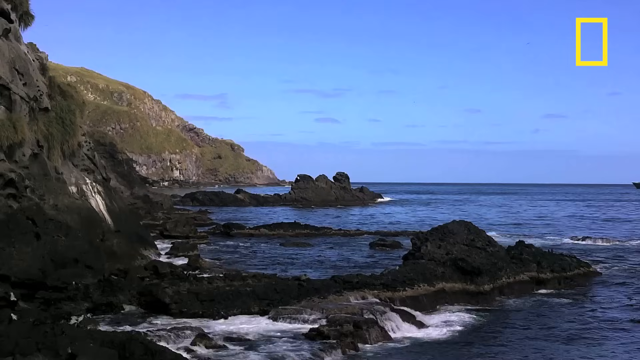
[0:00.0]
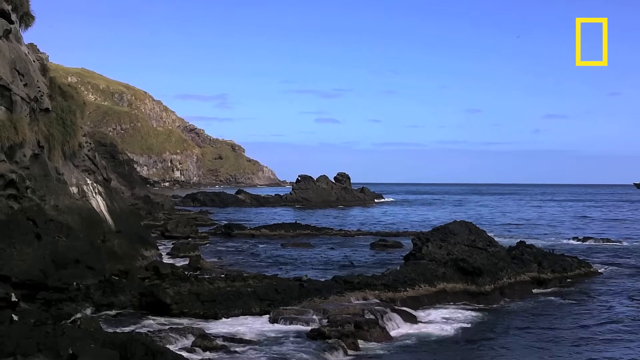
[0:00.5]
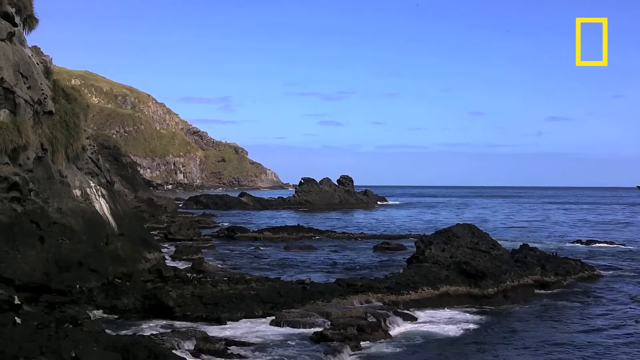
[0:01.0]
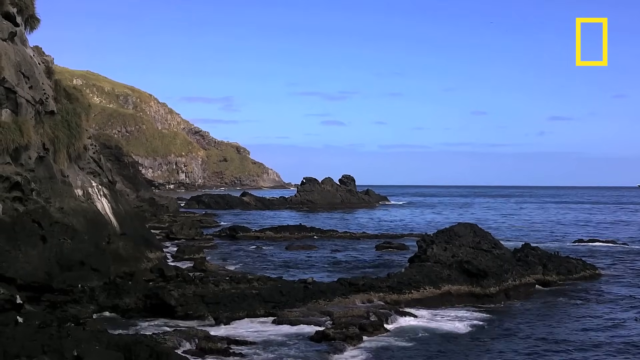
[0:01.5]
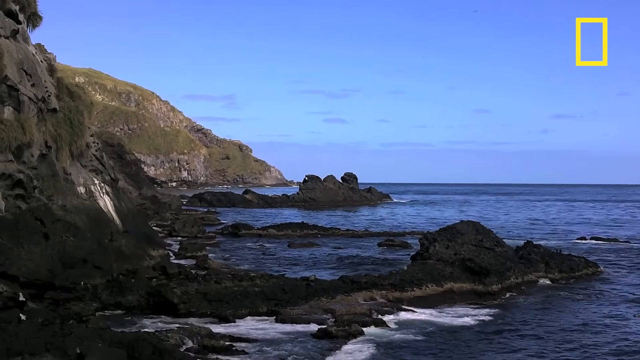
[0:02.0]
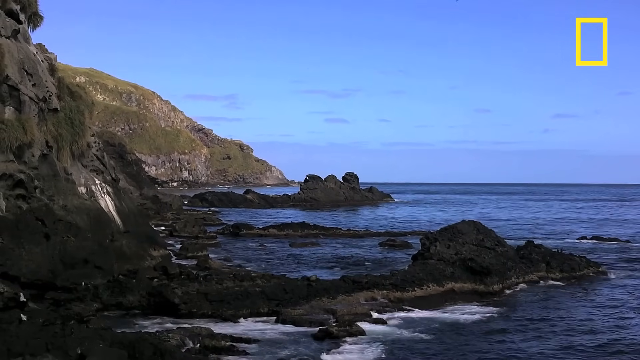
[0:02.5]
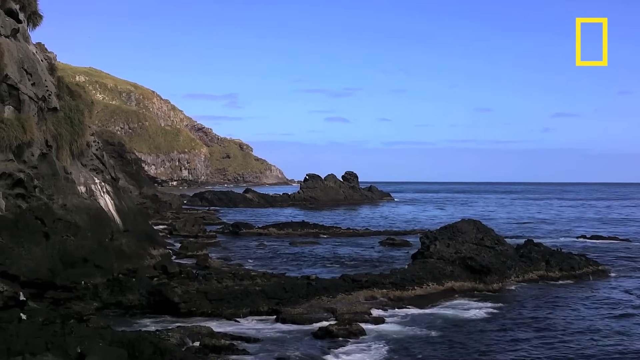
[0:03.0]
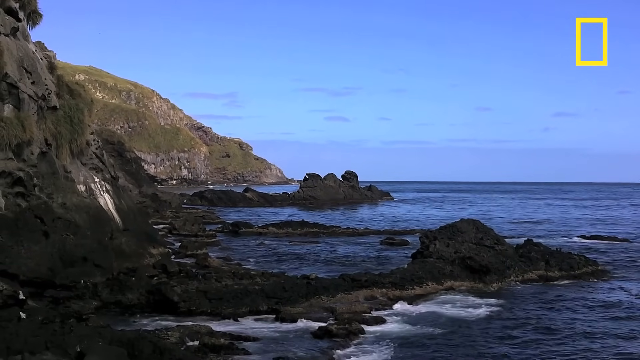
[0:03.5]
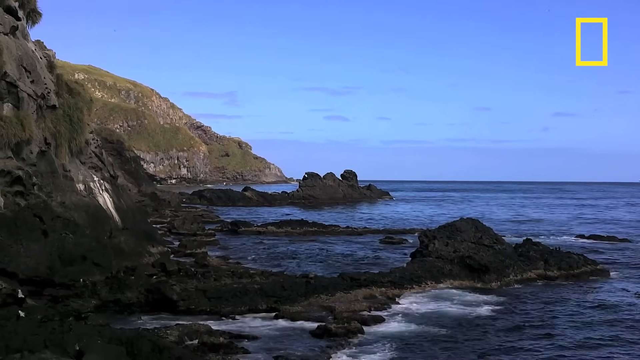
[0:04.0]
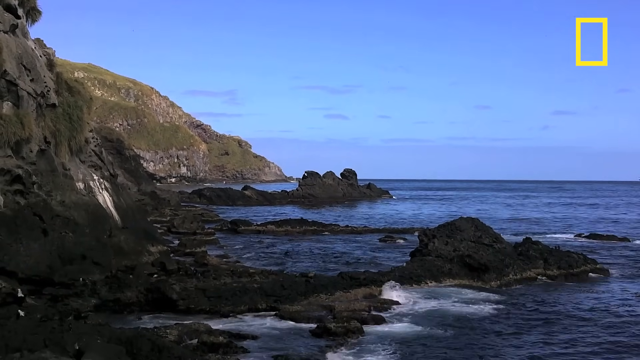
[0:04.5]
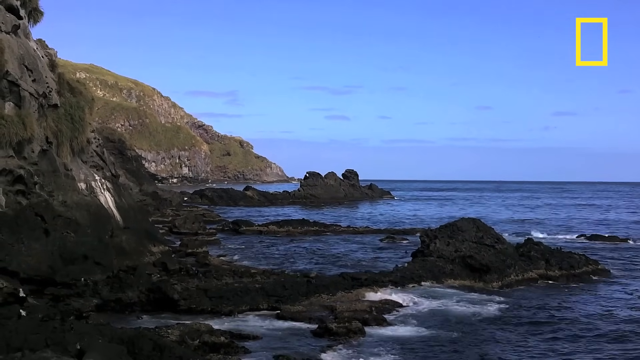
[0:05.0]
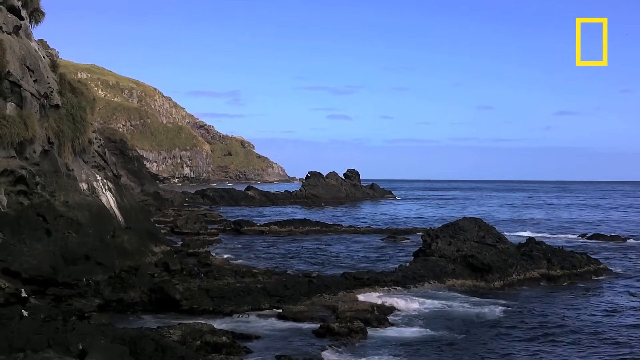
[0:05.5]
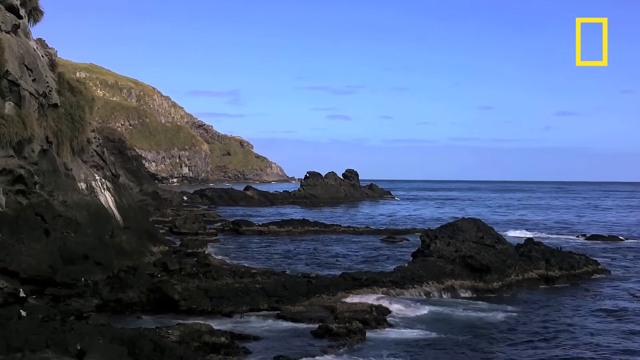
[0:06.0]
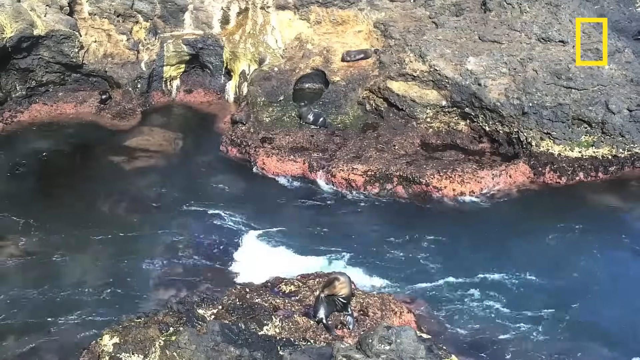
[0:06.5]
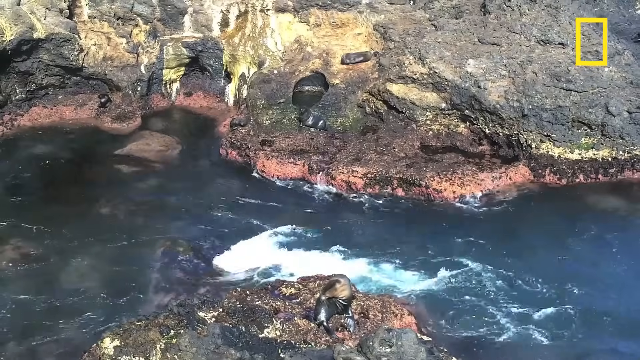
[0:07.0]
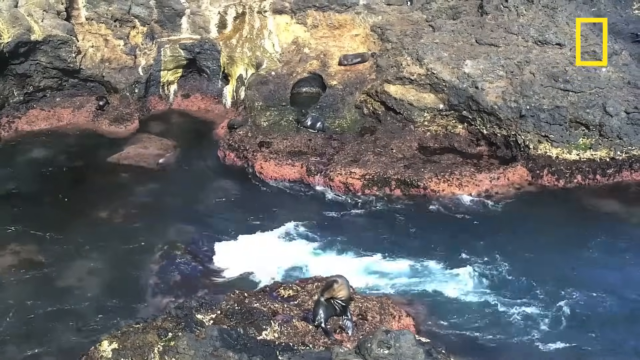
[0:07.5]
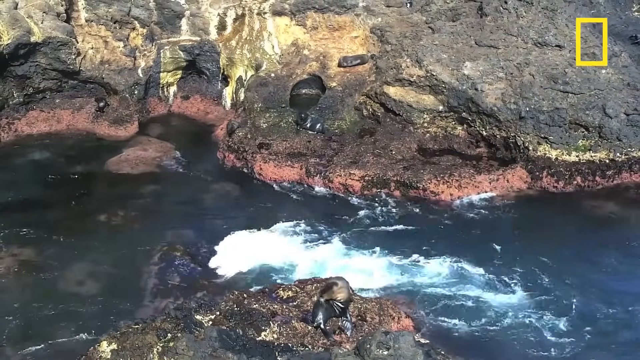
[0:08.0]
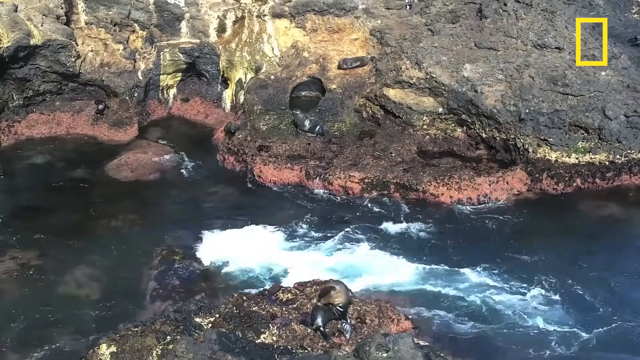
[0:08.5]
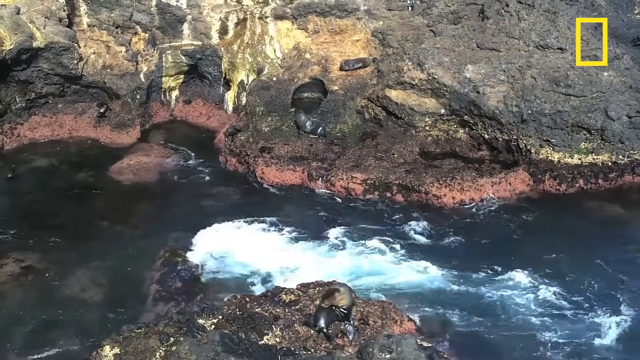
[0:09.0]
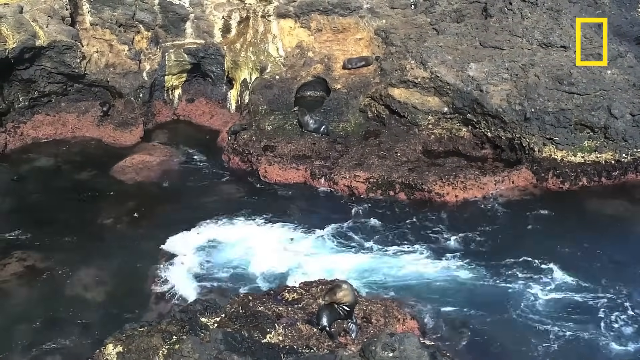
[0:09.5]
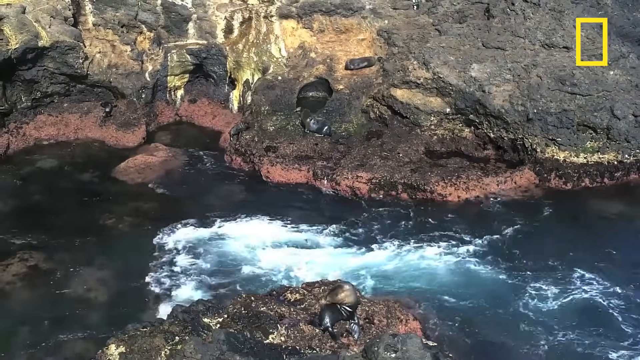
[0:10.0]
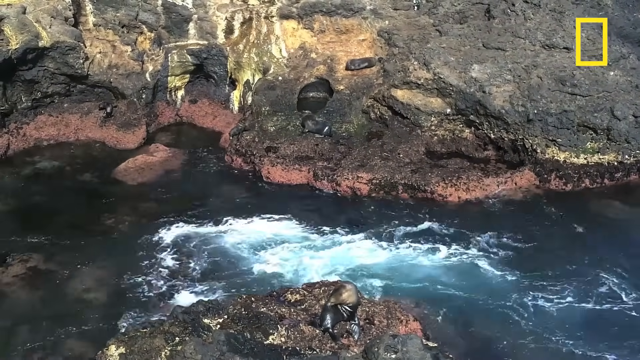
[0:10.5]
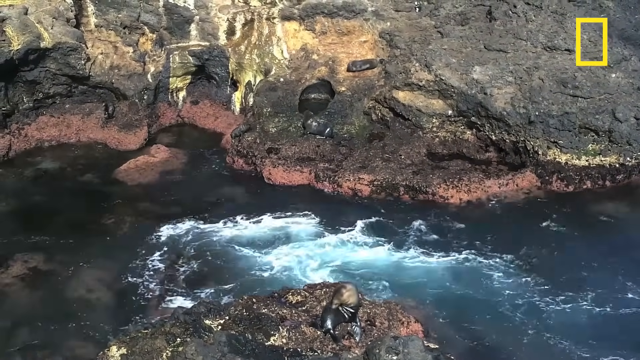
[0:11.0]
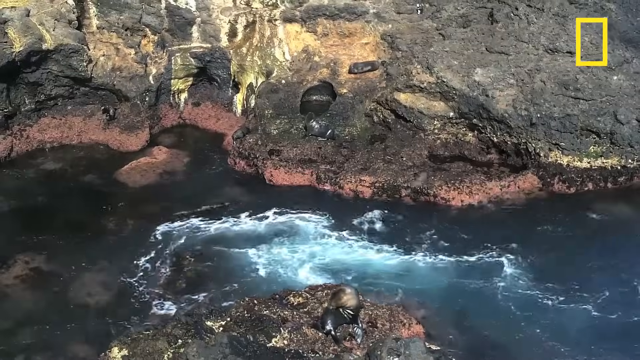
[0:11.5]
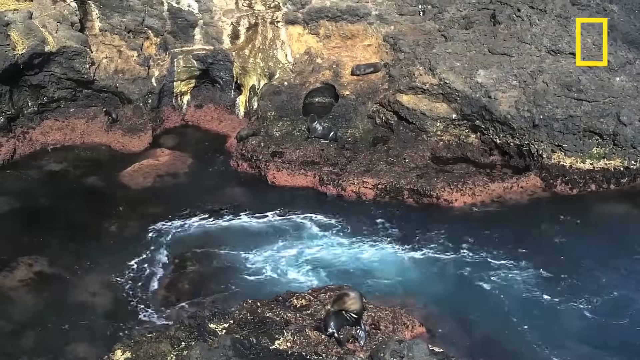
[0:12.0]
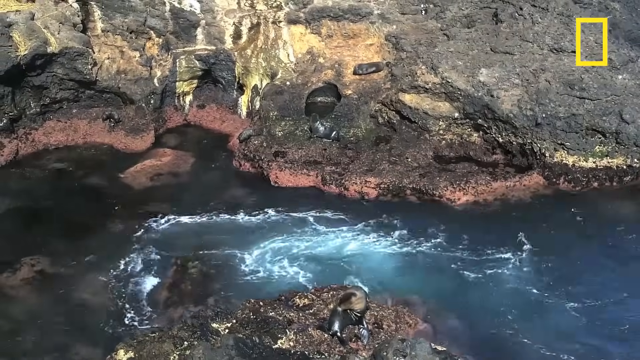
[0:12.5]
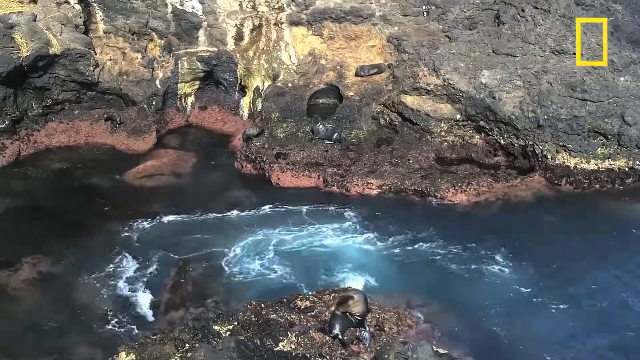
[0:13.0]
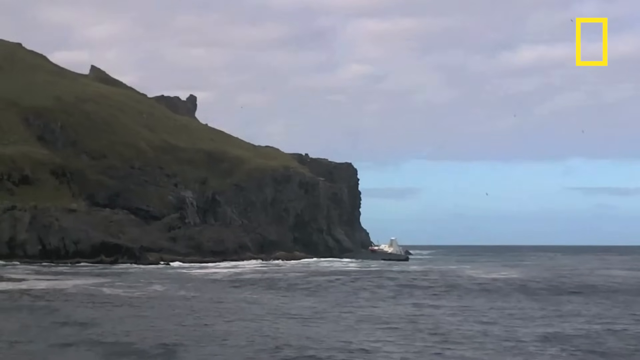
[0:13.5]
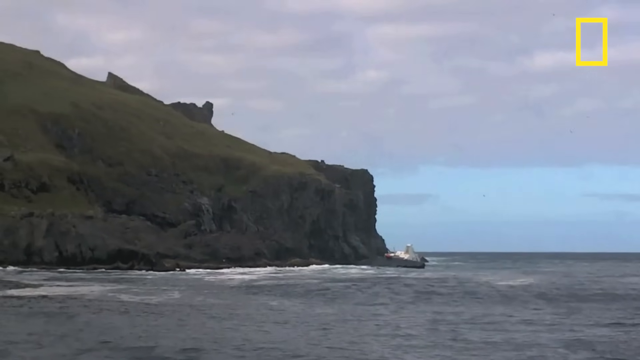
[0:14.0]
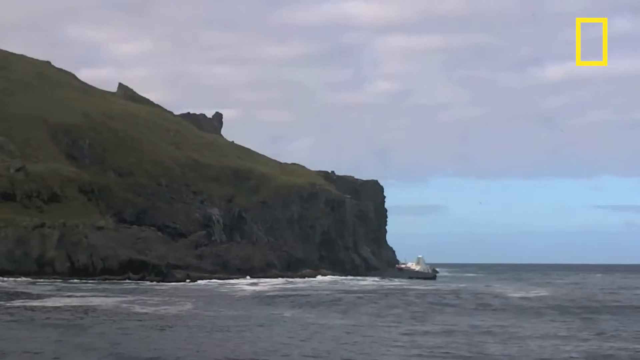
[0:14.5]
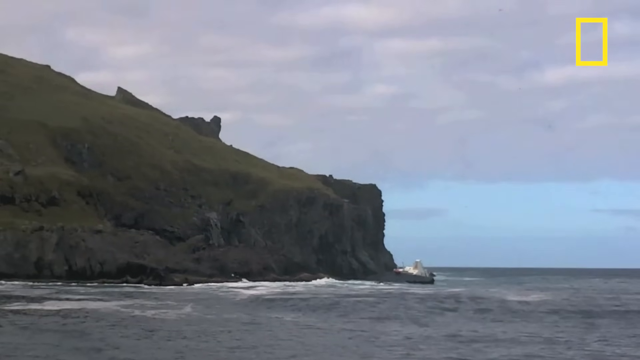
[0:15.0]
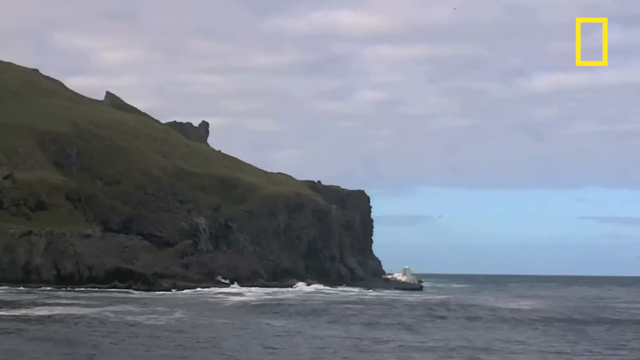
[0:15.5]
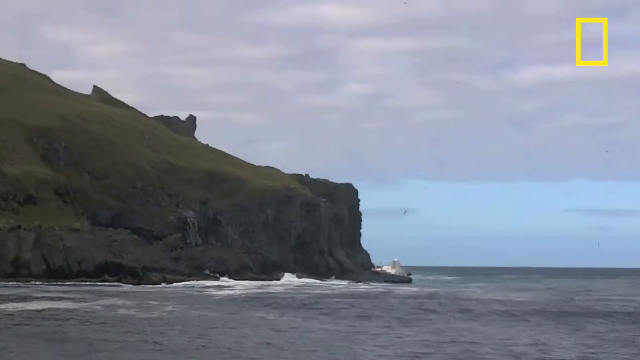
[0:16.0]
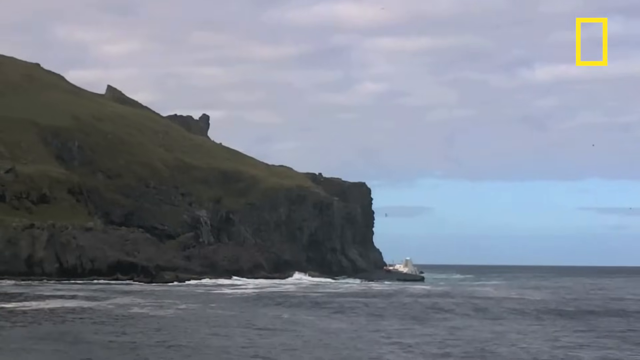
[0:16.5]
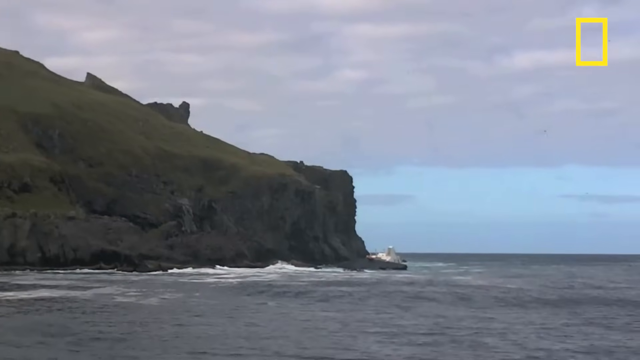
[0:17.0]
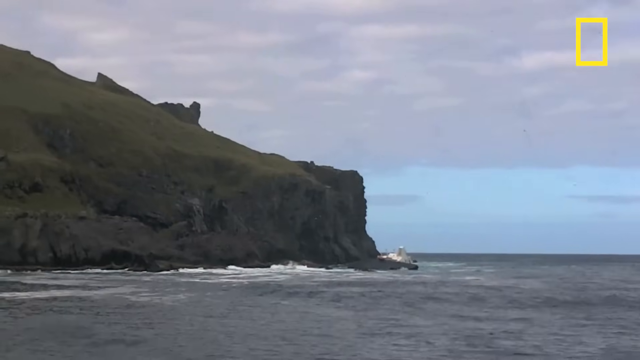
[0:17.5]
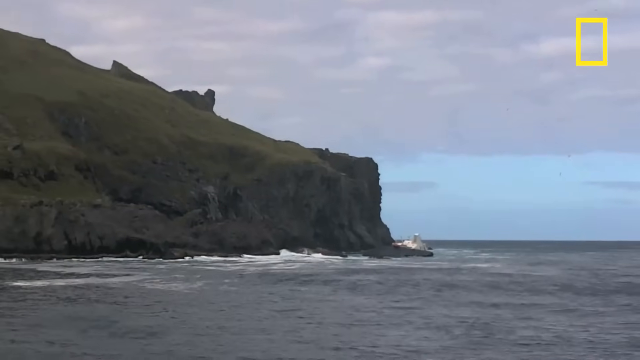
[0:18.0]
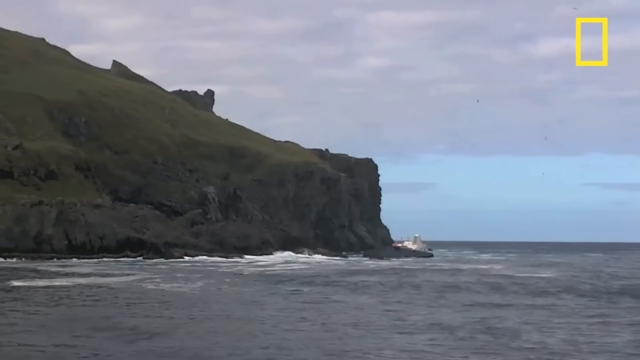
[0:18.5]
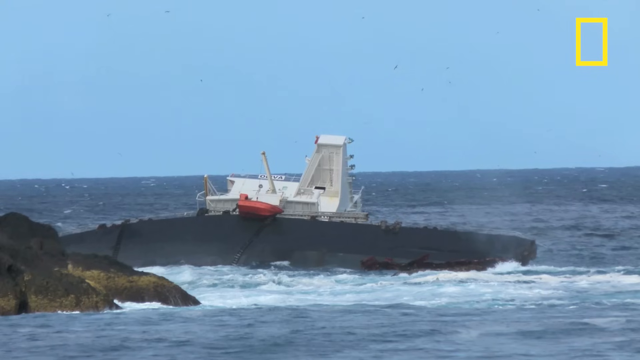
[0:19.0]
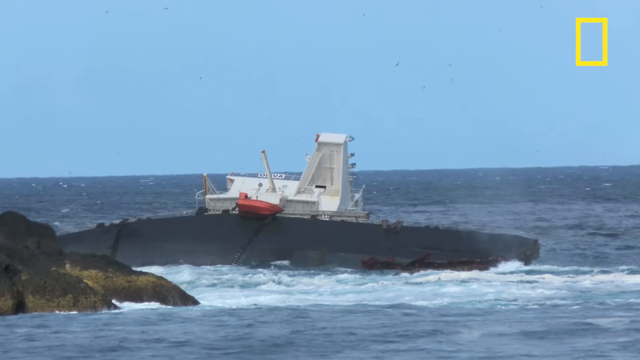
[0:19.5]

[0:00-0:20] The ocean appears with churned-up water, kind of bubbling and moving around along what is kind of a rocky shore. A cliff or hill stands in the background, along with what maybe looks like some kind of scientific equipment. At this point it is just scenery: water, some rocky land and the cliff, with no animals or sea life visible. The sky is blue and it seems to be a pretty calm day on the water. The water kind of moves in and out of little crevices, and there is a bird in the background.